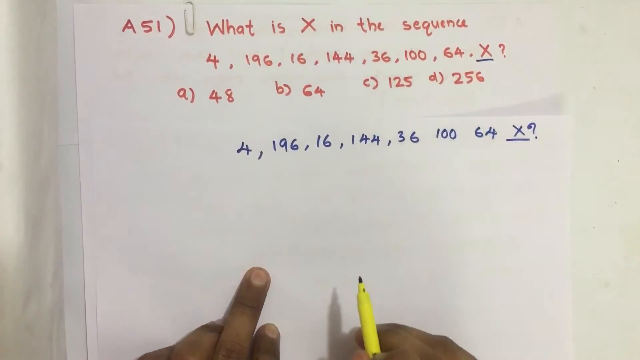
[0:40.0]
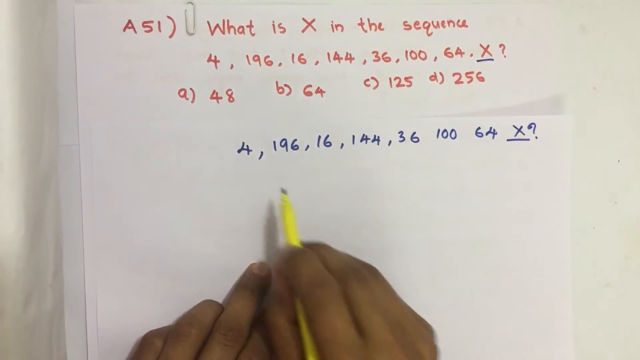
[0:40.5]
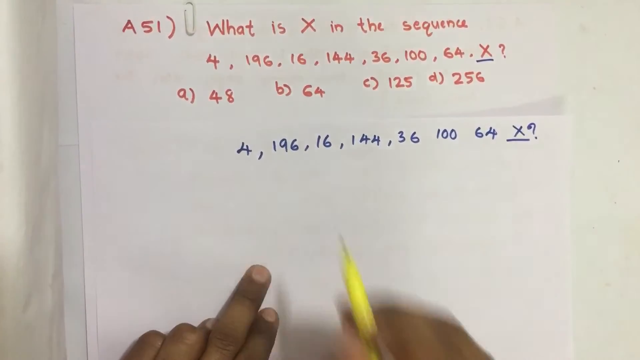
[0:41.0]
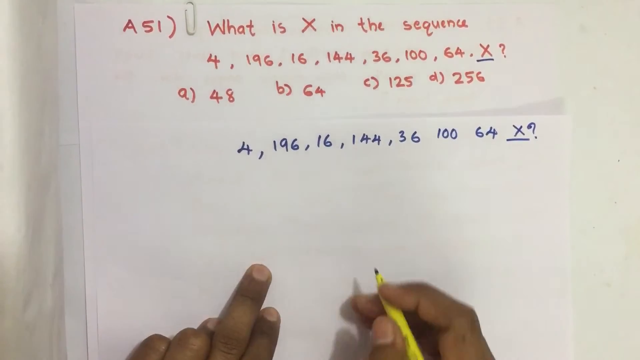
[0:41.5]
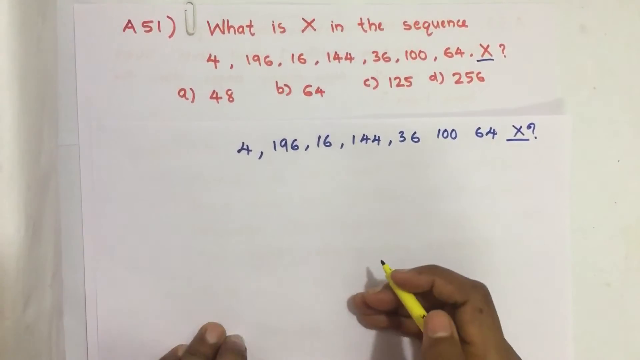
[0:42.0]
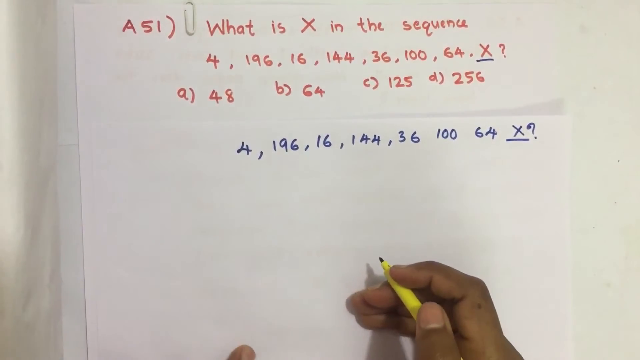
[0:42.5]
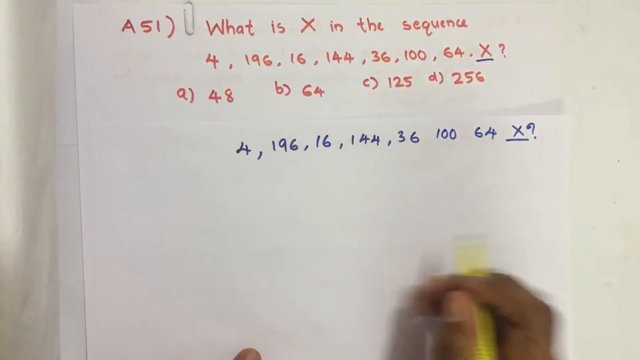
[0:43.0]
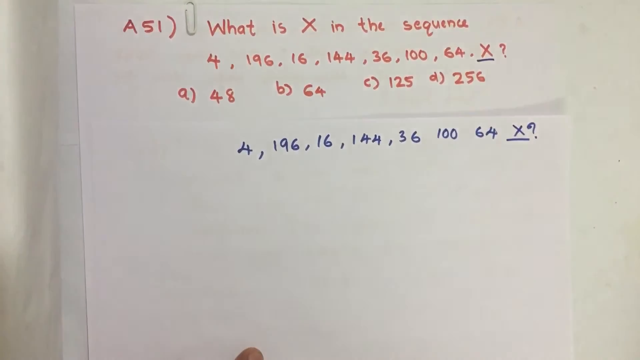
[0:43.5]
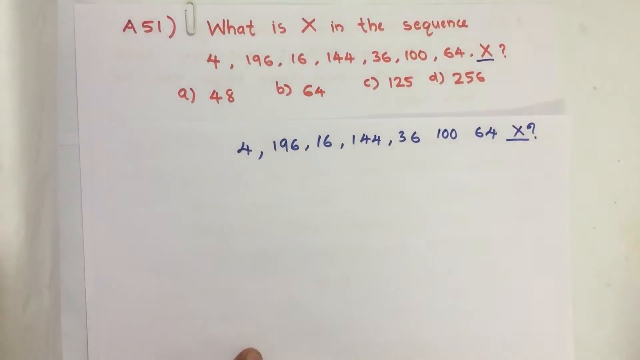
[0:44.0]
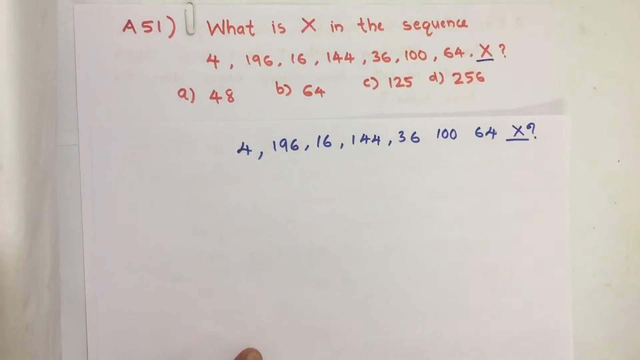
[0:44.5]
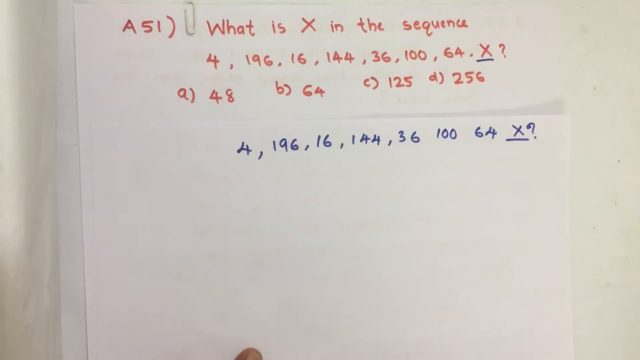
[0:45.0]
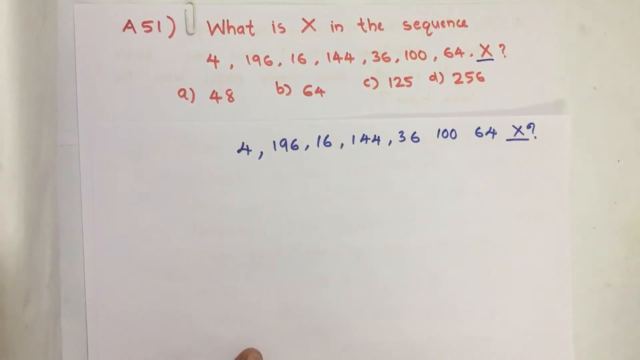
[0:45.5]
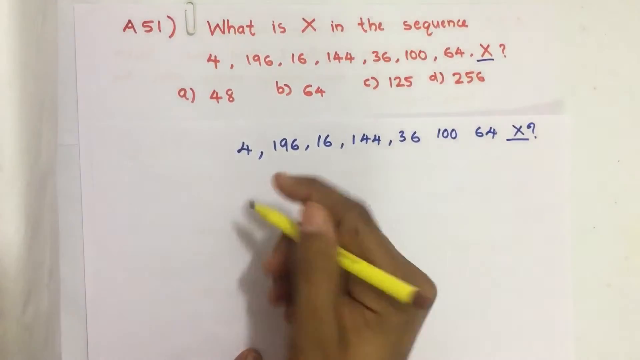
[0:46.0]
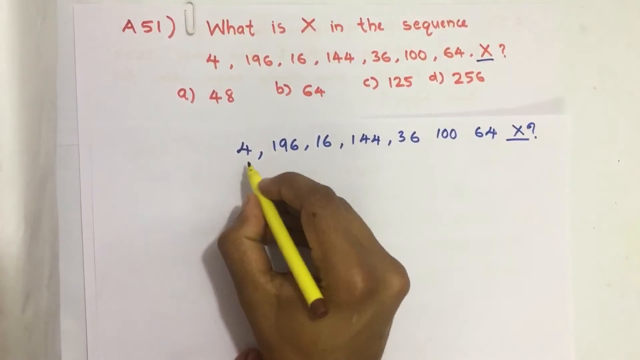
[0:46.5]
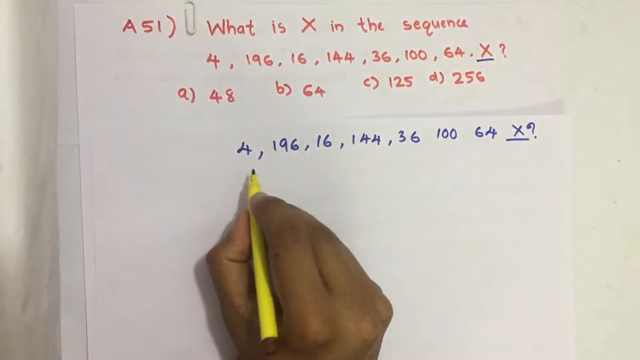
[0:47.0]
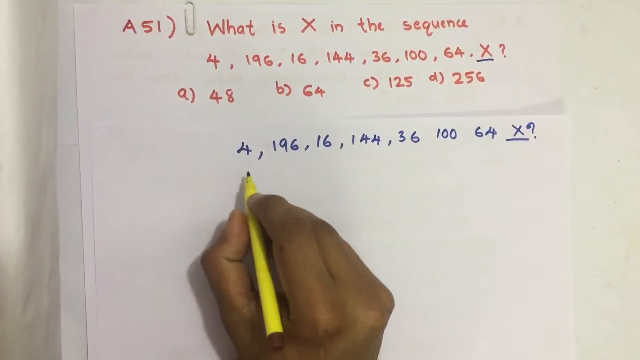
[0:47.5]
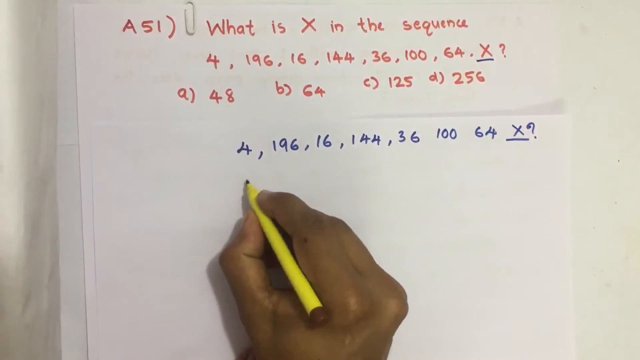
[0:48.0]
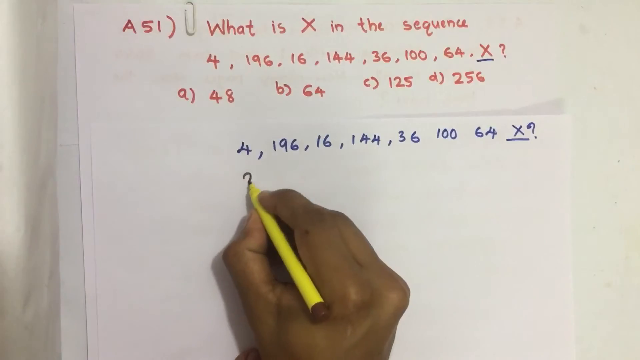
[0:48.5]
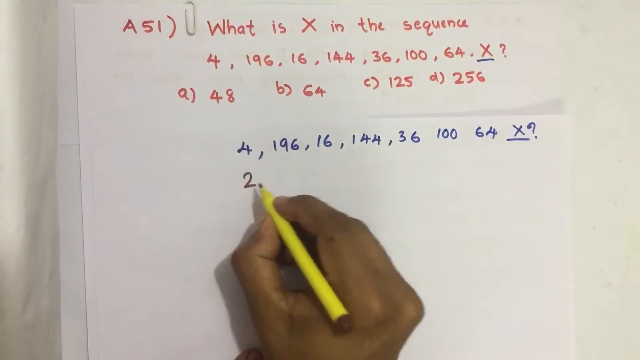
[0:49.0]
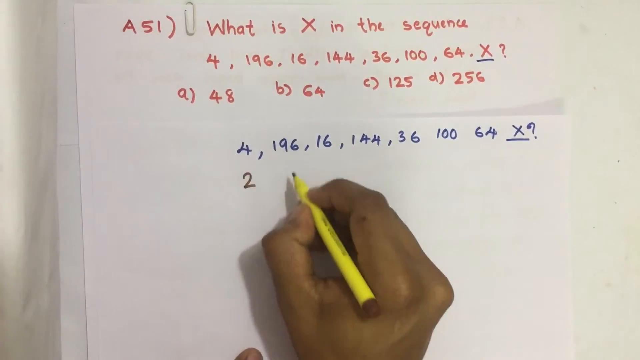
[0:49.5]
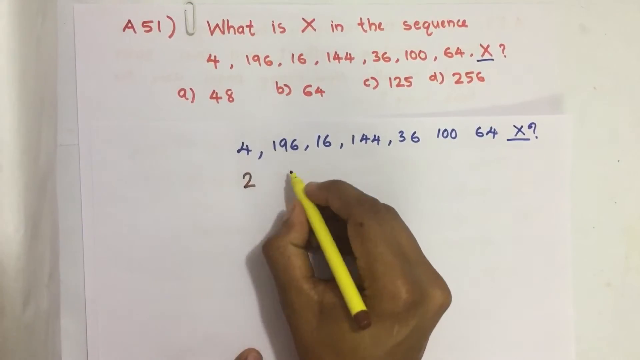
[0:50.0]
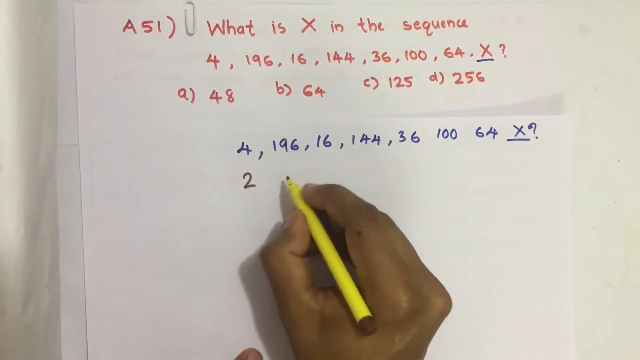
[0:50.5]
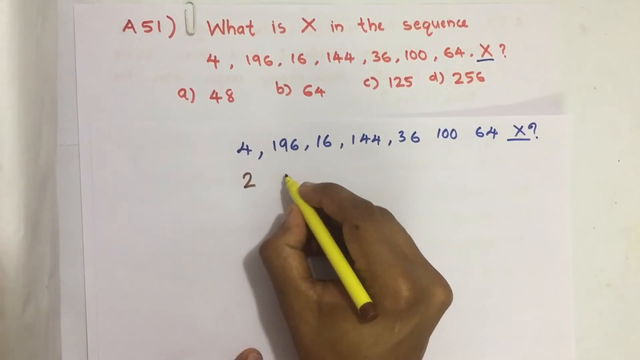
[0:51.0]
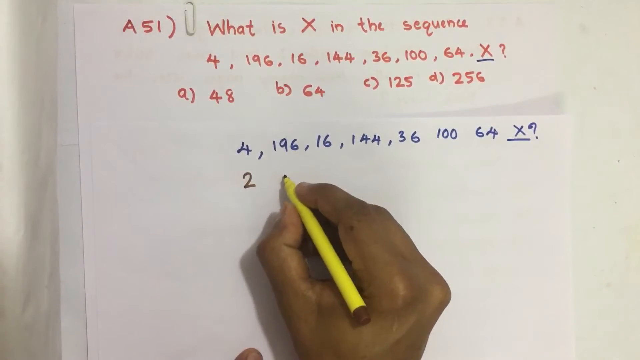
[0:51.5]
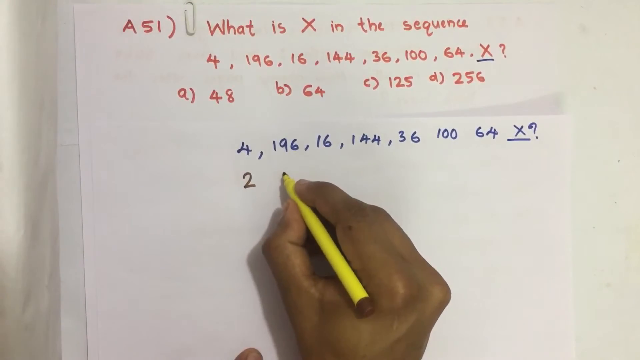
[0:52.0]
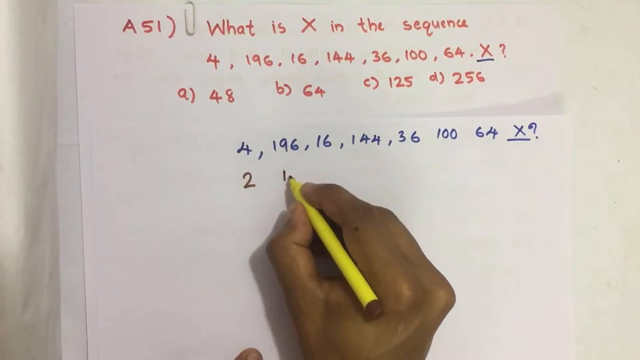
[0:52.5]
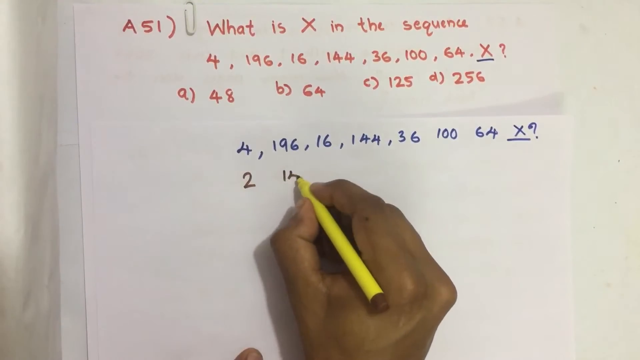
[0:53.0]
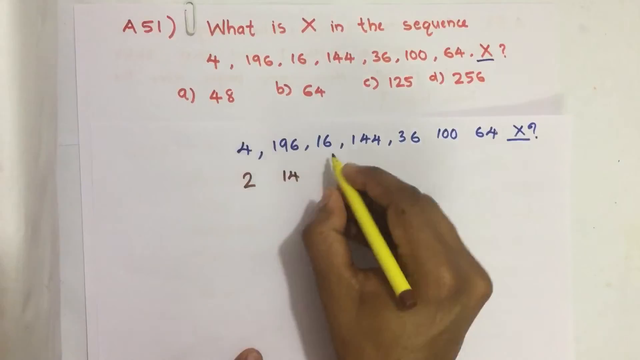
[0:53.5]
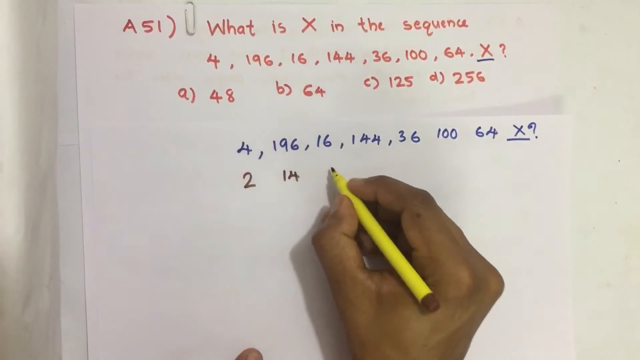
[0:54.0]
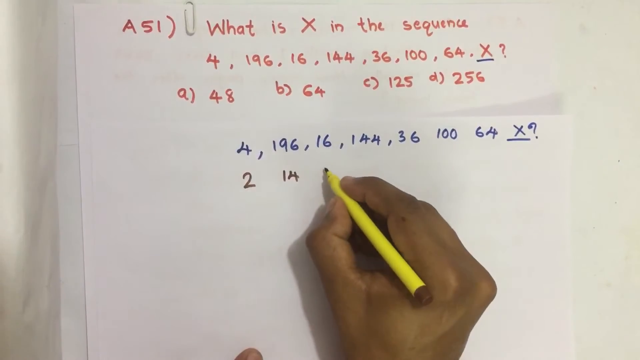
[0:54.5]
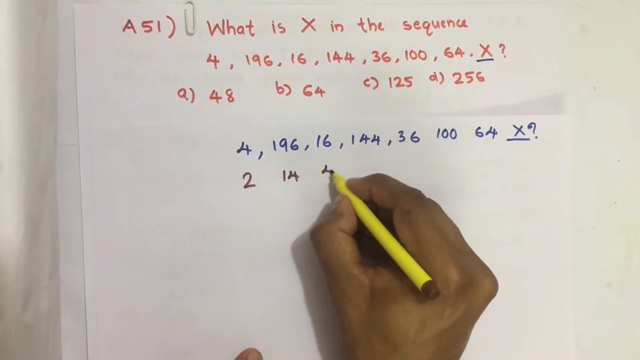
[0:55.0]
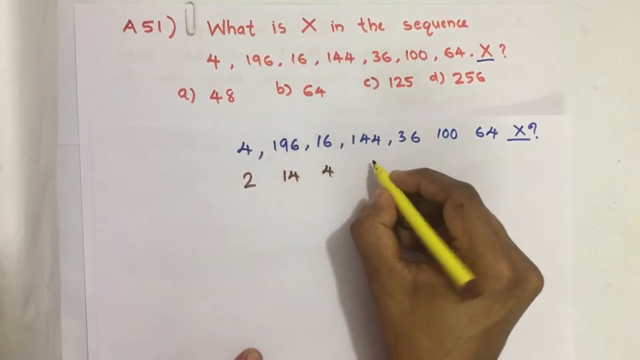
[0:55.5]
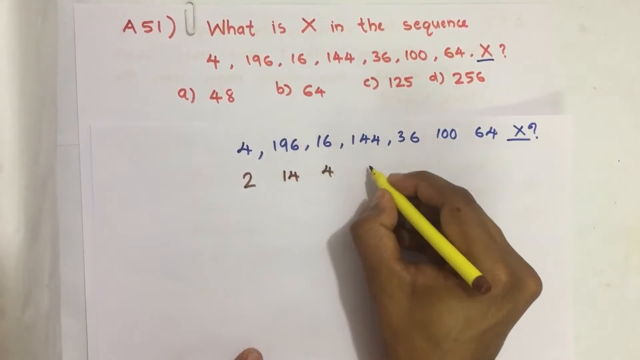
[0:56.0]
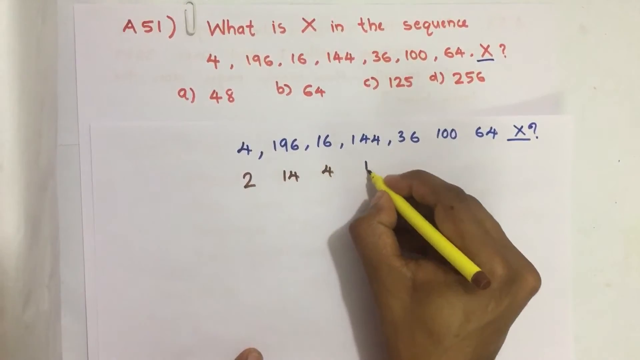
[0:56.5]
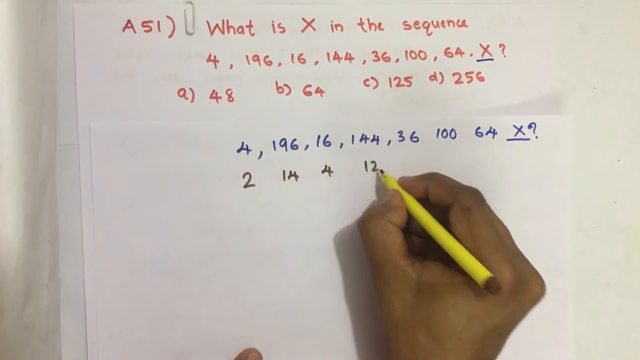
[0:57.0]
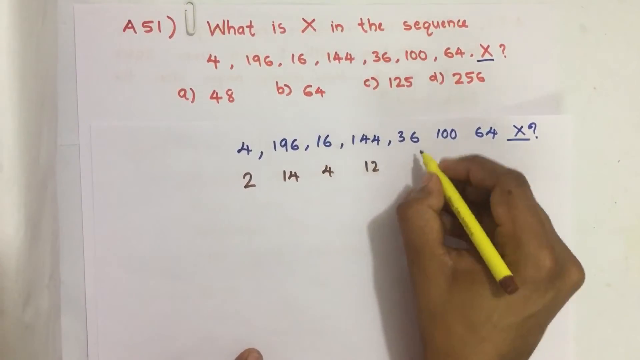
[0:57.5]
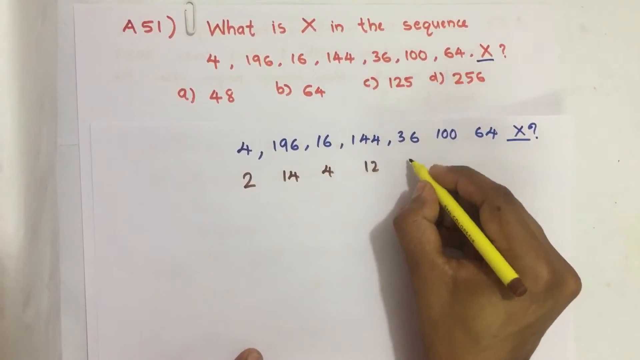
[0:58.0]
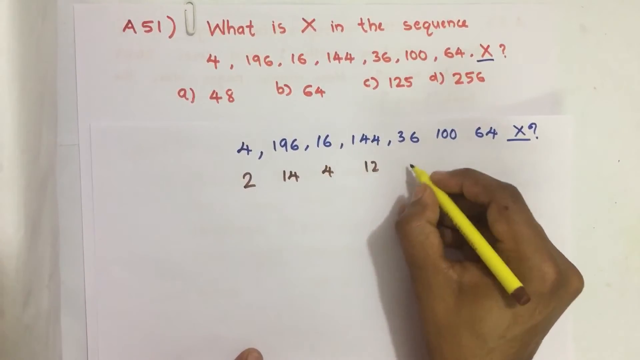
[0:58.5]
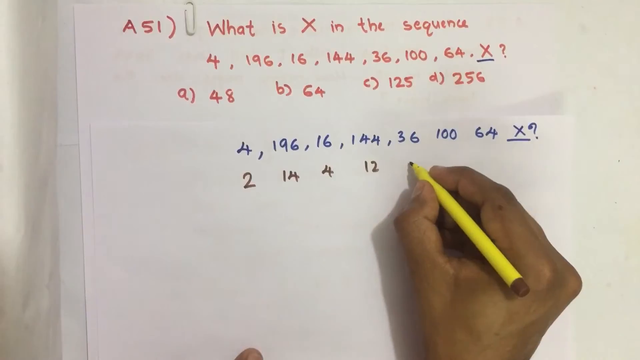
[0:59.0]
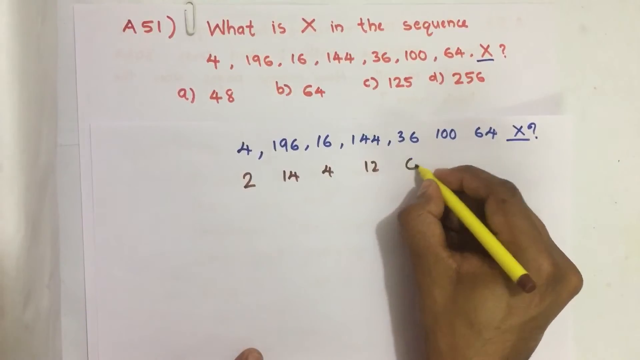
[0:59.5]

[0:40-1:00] The same white piece of paper with the paper clip at the top and the problem written in red is shown. The writing instrument appears to be a blue pen rather than a pencil. With the sequence written down, the person works on solving it, apparently by finding the square roots of the numbers: under 4 they write 2, under 196 they write 14, under 16 they write 4, under 144 they write 12, and under 36 they write 6. Nothing has been written yet under 100 or 64.